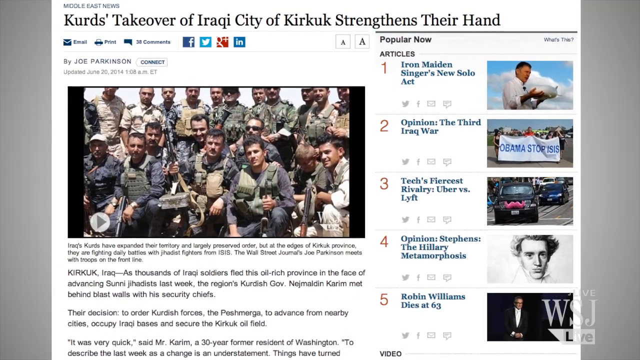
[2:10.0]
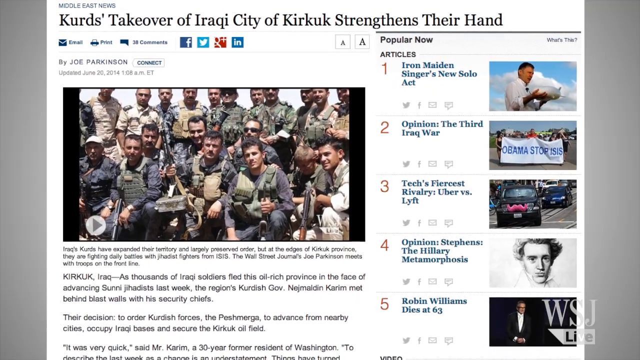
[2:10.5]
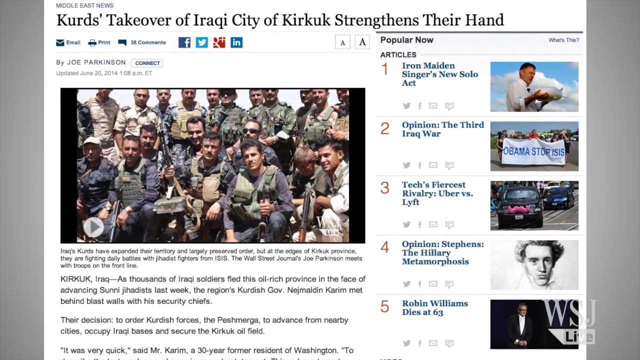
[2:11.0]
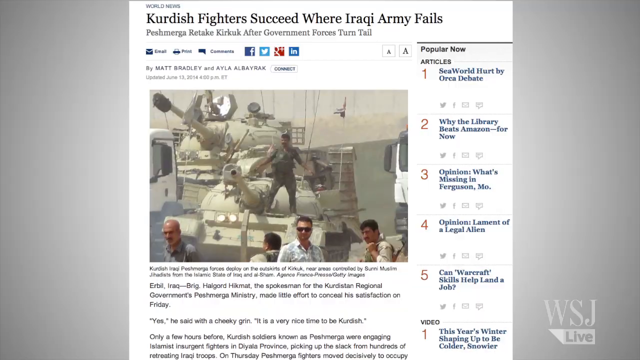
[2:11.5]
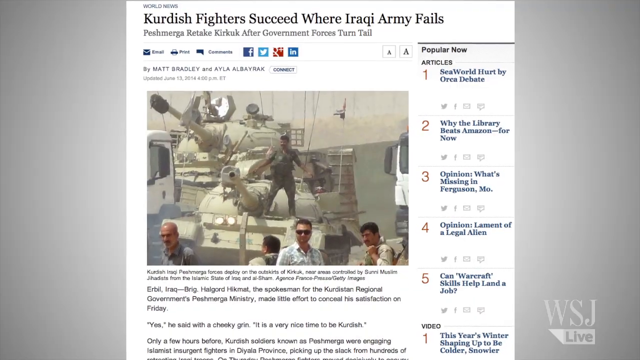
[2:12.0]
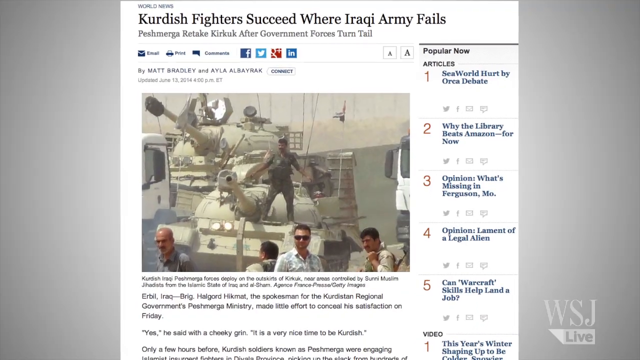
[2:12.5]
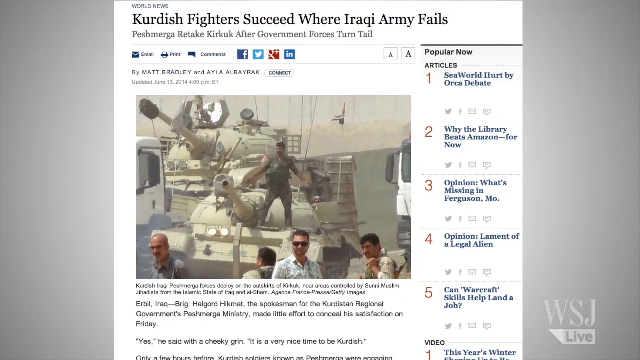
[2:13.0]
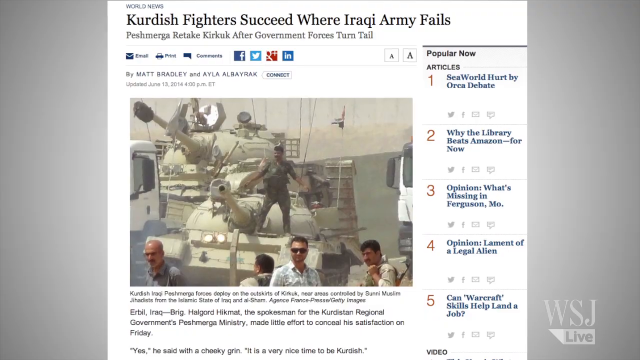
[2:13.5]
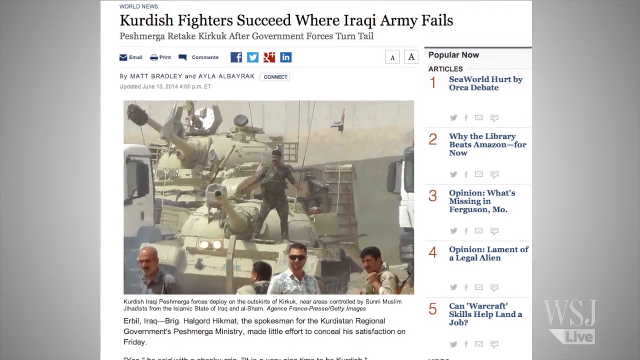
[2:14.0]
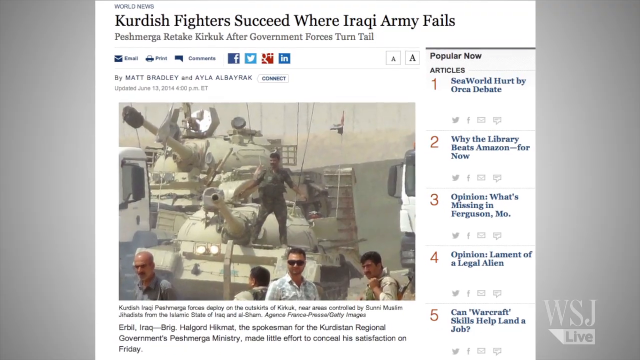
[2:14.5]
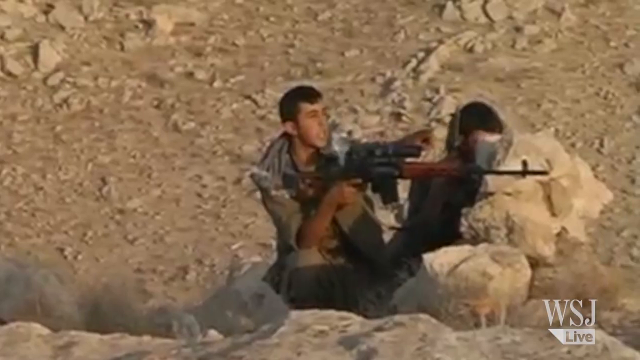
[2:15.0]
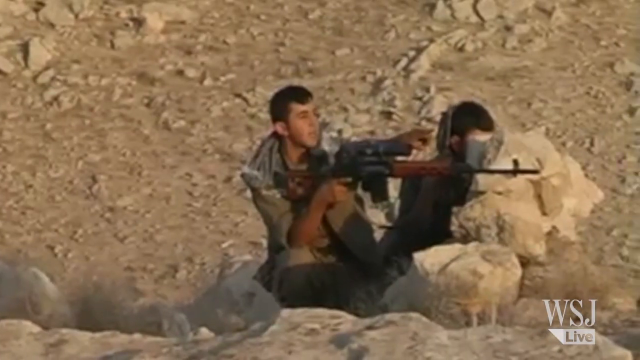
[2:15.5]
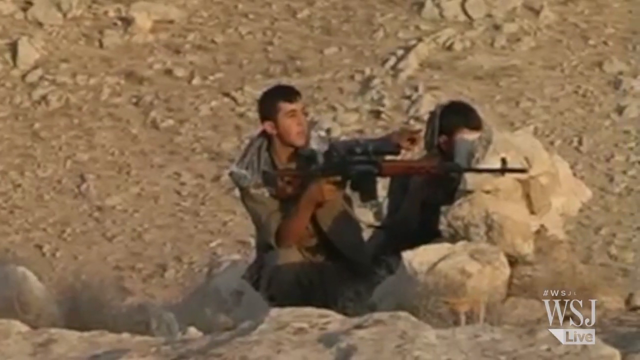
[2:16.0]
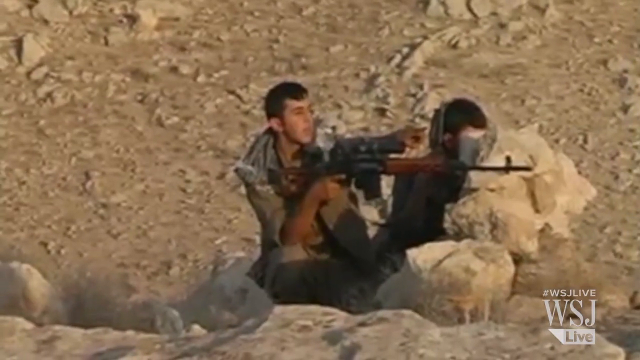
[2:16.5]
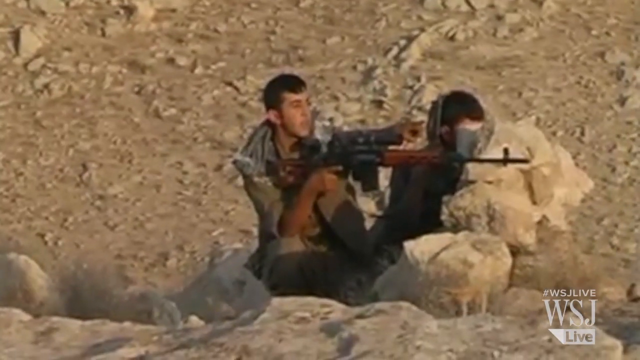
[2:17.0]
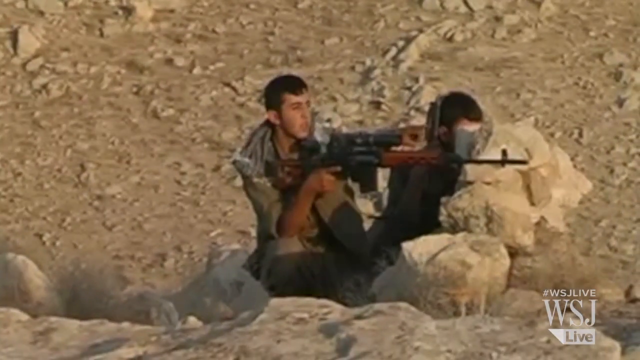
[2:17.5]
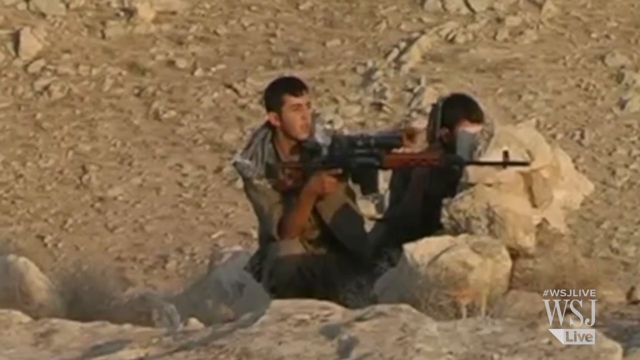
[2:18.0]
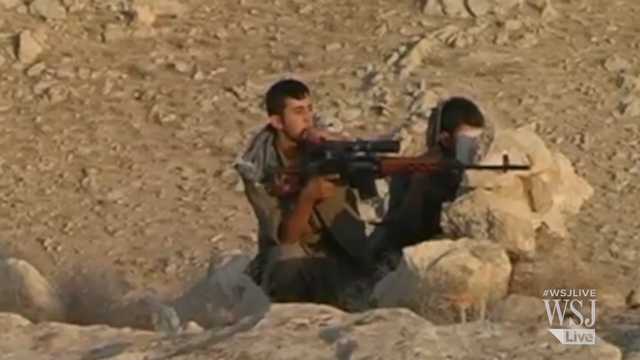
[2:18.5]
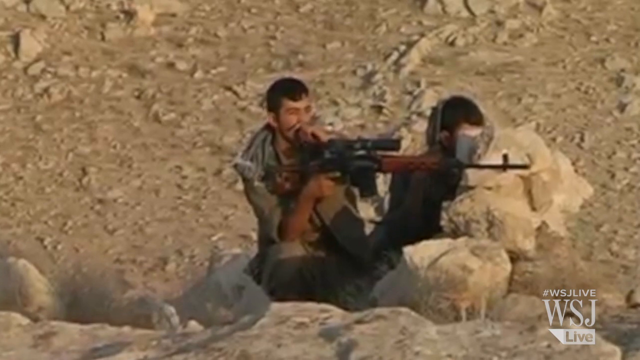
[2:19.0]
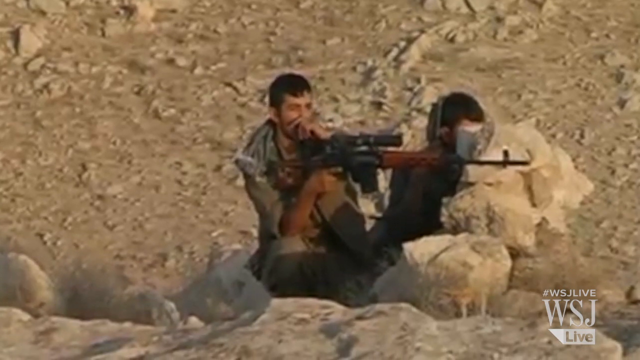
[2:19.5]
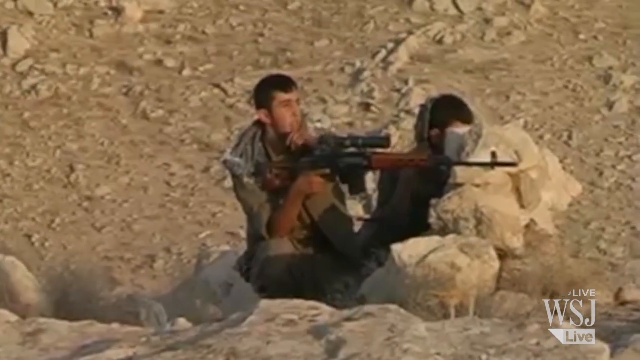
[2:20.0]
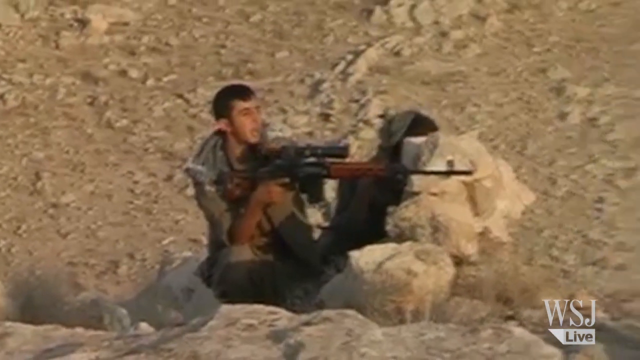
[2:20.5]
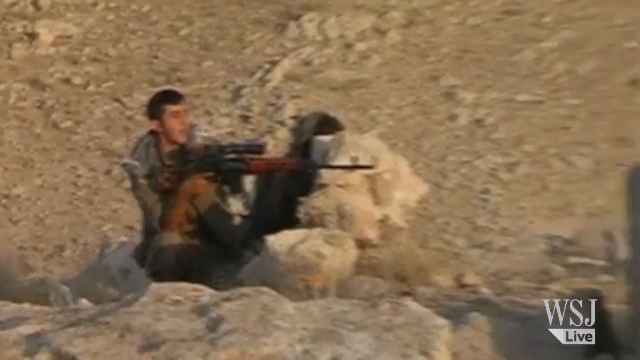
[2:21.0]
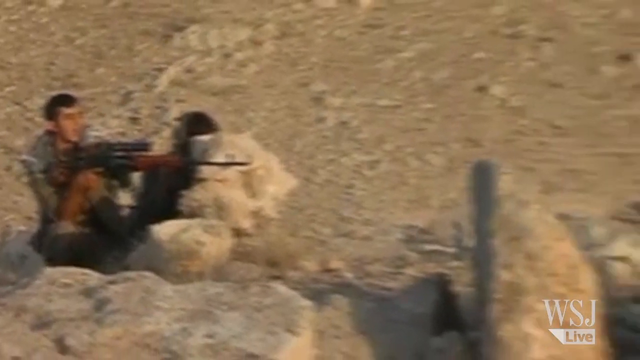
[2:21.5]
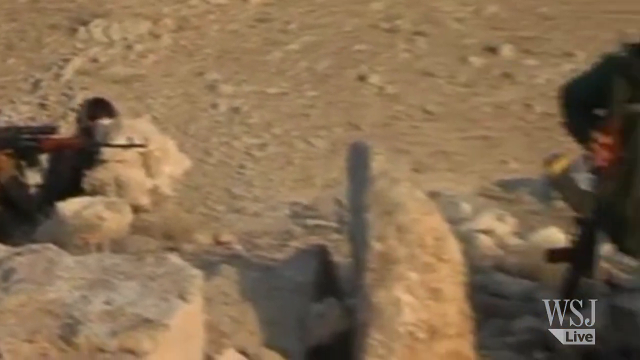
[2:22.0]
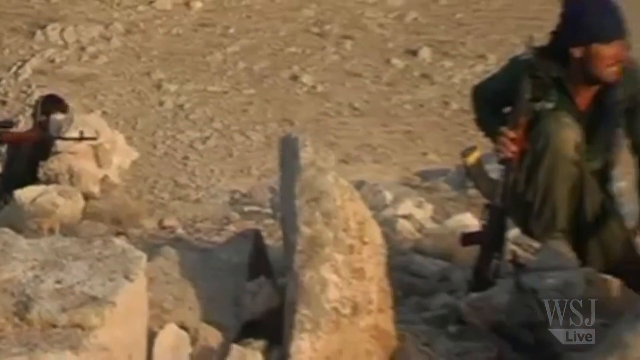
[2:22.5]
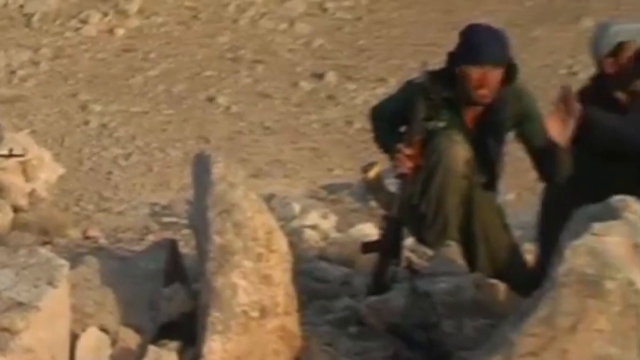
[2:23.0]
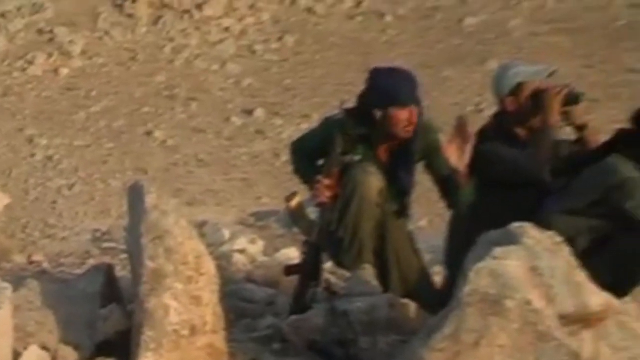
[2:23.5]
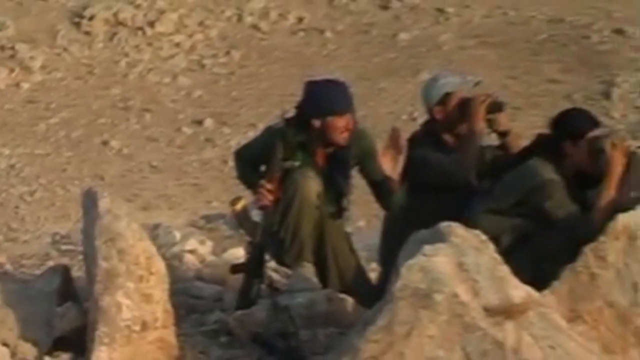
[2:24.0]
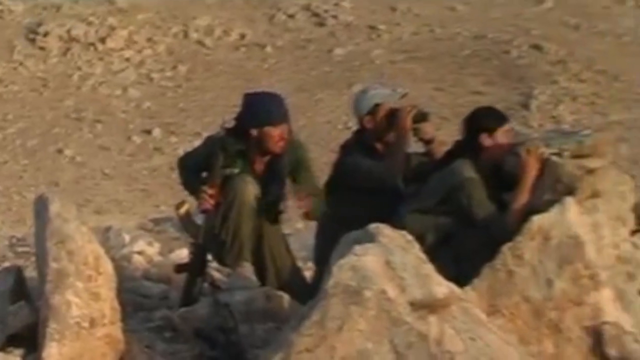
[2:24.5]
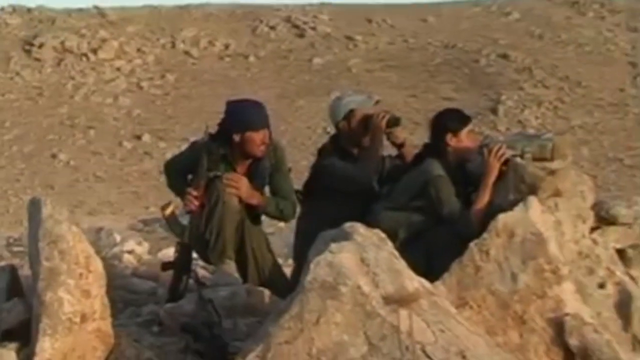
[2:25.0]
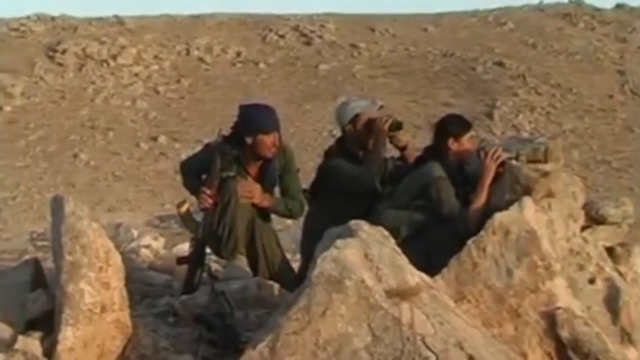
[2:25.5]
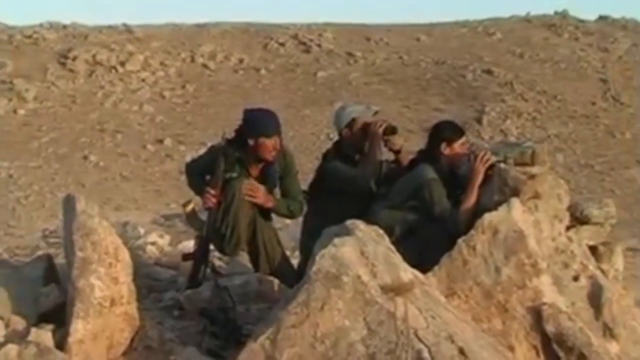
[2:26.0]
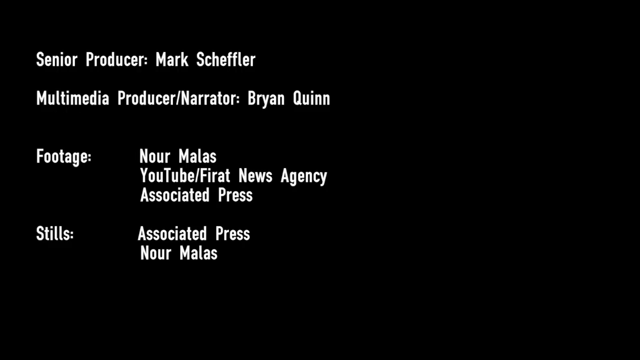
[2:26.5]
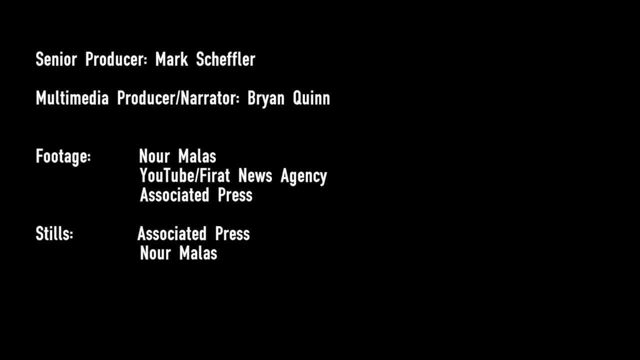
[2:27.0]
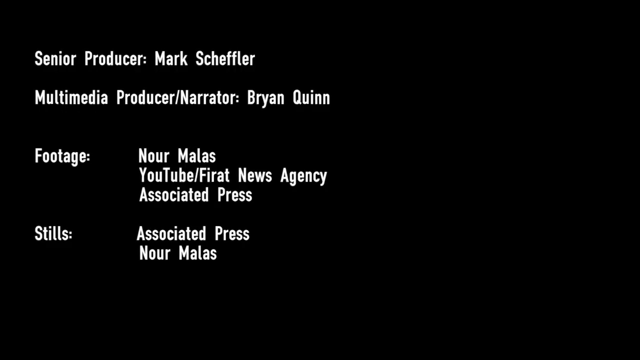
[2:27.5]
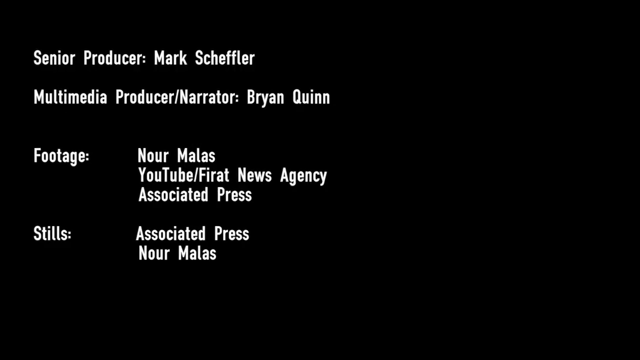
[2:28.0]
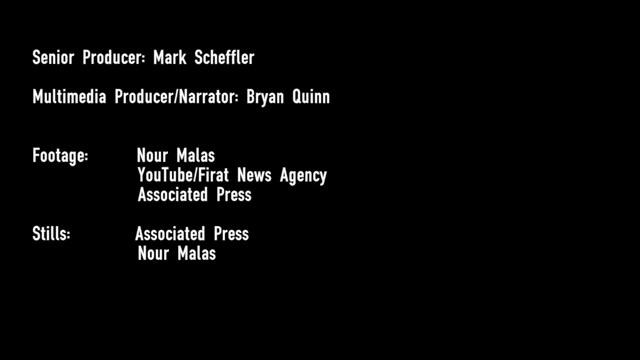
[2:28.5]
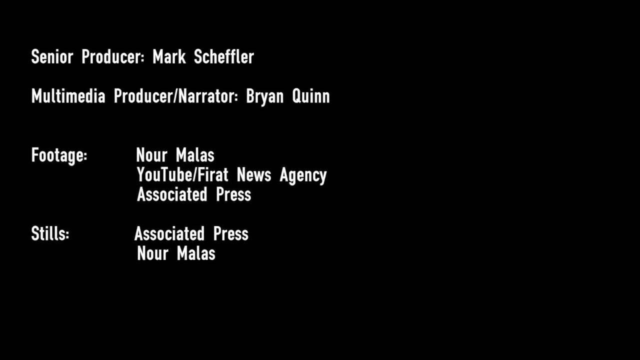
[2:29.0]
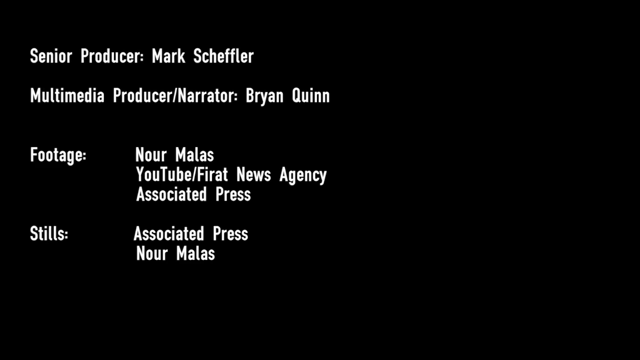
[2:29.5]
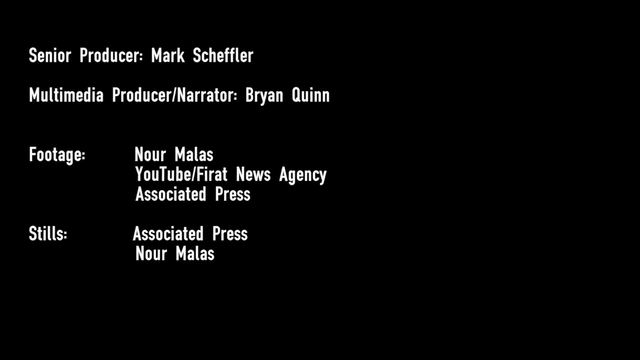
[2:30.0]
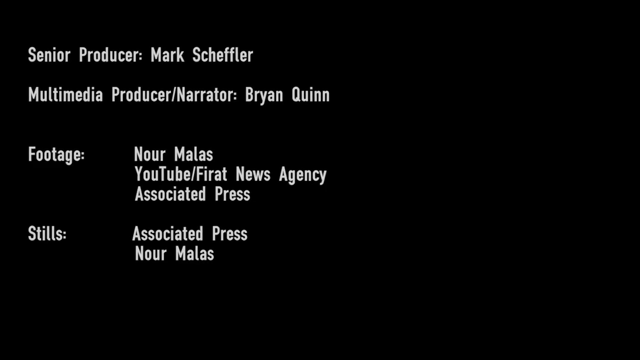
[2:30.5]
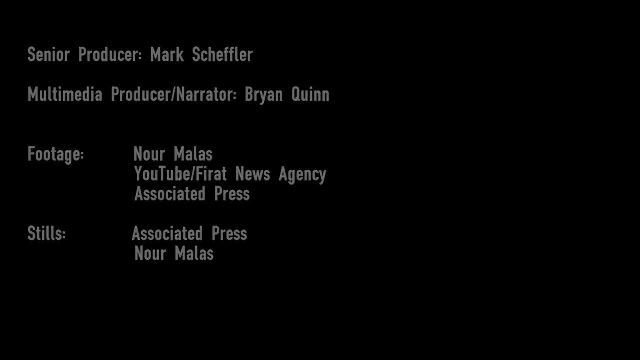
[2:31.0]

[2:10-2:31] Light gray letterboxing frames the left and right sides. At the top, an article reads "Kurds take over of Iraqi city of Kirkuk strengthens their hand", and below it is a group picture of many men in military uniforms, probably about three rows of them. Another article follows, titled "Kurdish fighters succeed where Iraqi army fails", with a picture below of a couple of tanks facing the camera. On the lead tank, a man in dark green stands right in the center with his legs apart and his hands out at his sides, almost like a snow angel, on the right side of the tank so the gun is just to his left, pointing toward the camera. The camera zooms in a little on that article, and the video switches to footage of a man behind rocks on the right, aiming a sniper rifle over the rocks toward the right.